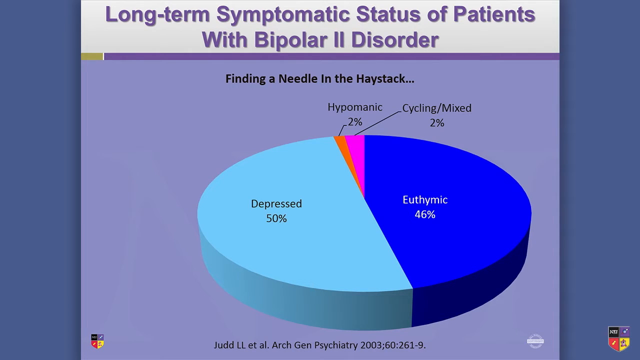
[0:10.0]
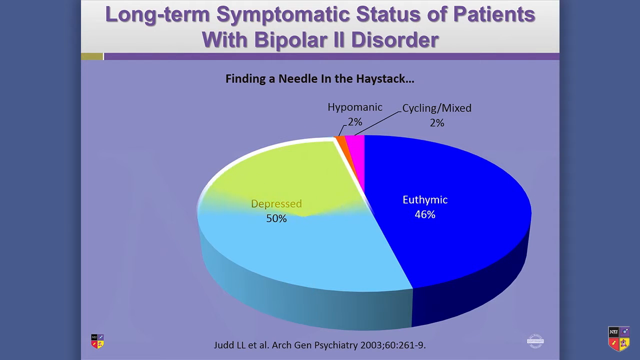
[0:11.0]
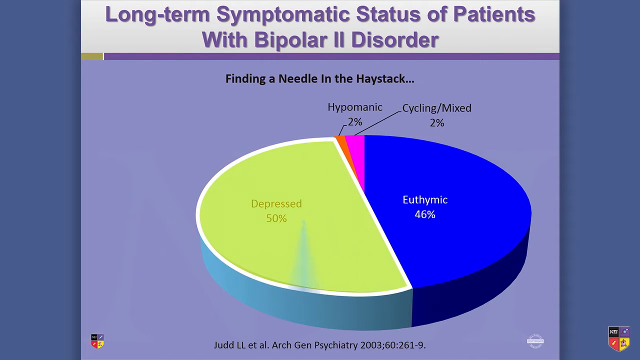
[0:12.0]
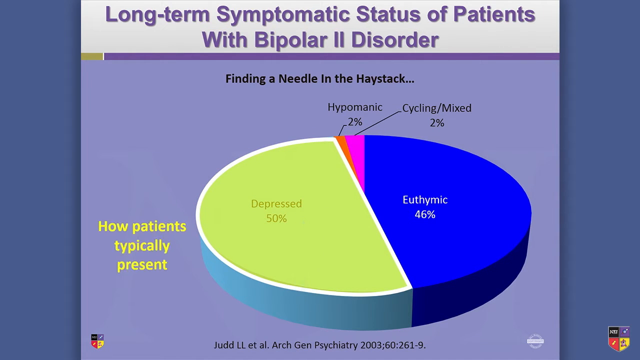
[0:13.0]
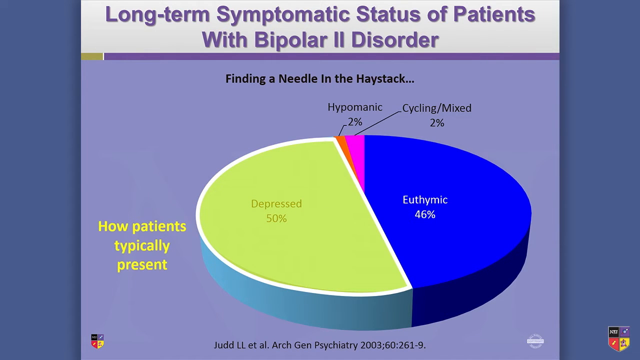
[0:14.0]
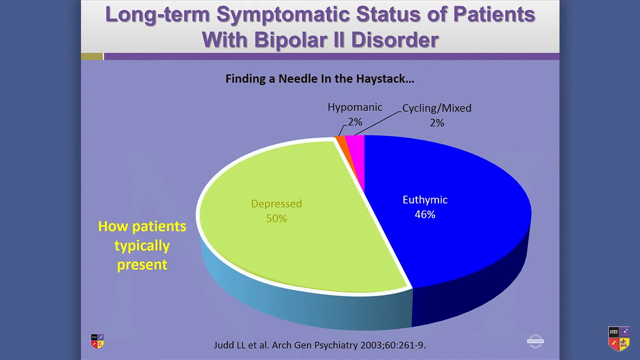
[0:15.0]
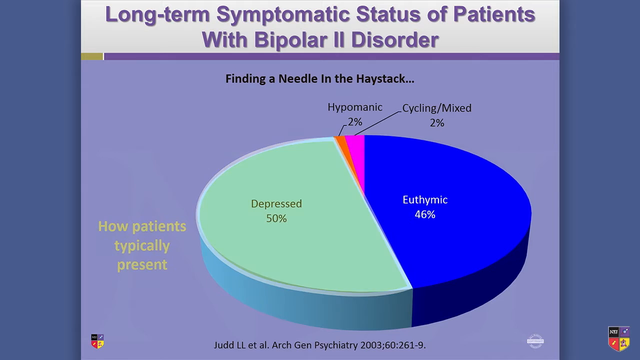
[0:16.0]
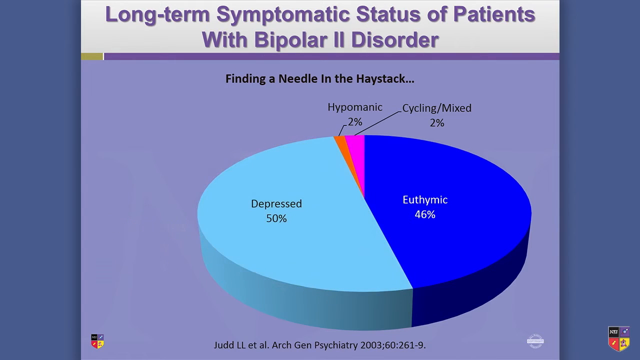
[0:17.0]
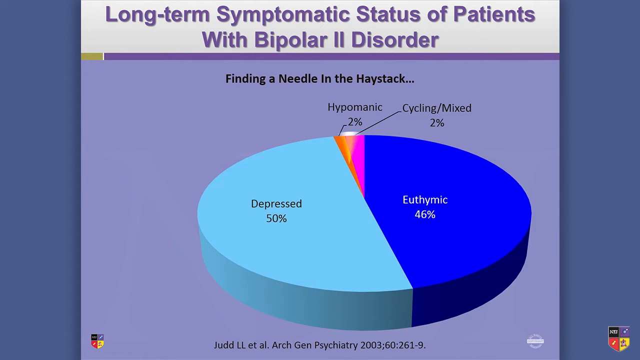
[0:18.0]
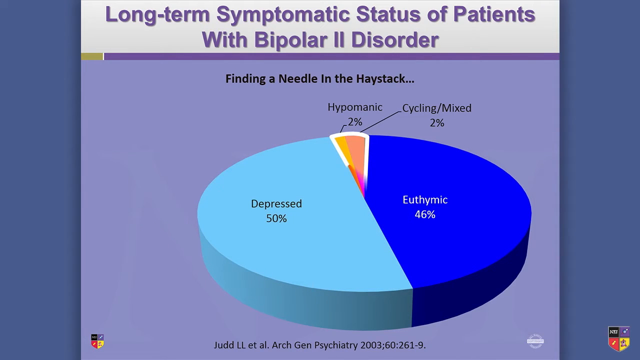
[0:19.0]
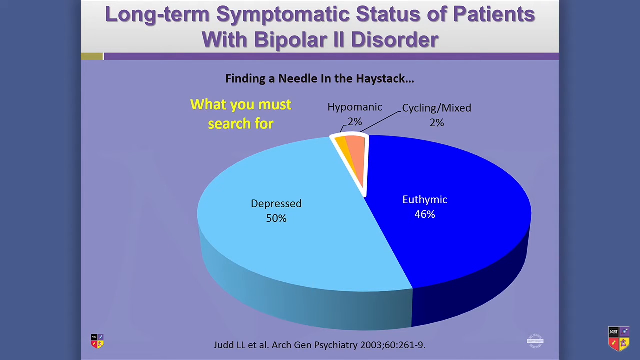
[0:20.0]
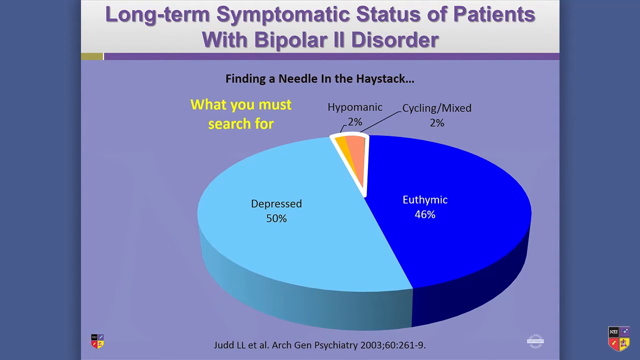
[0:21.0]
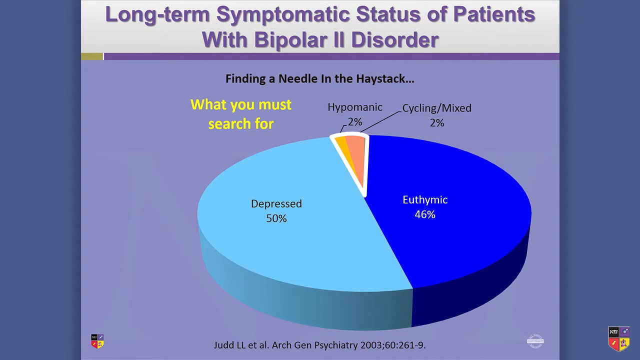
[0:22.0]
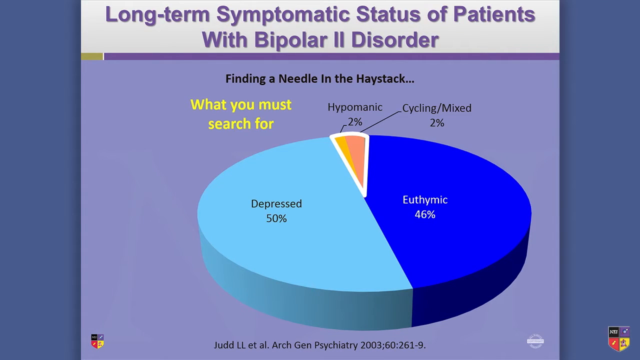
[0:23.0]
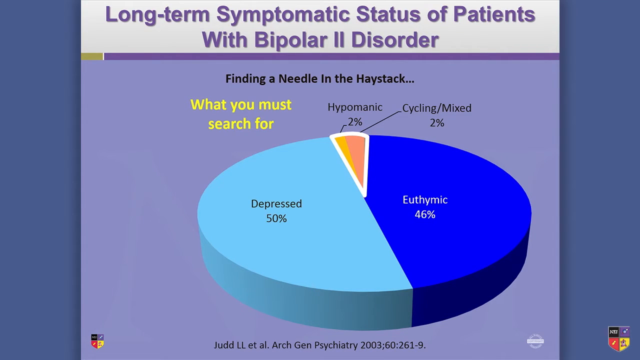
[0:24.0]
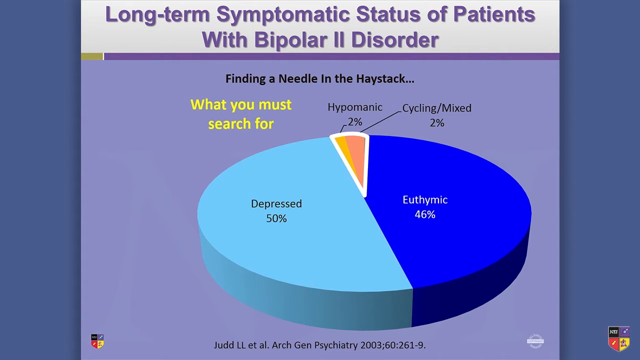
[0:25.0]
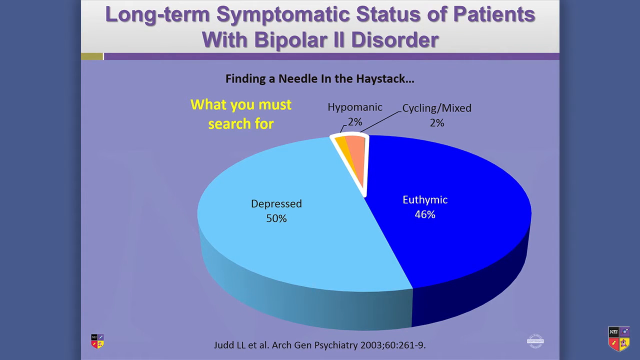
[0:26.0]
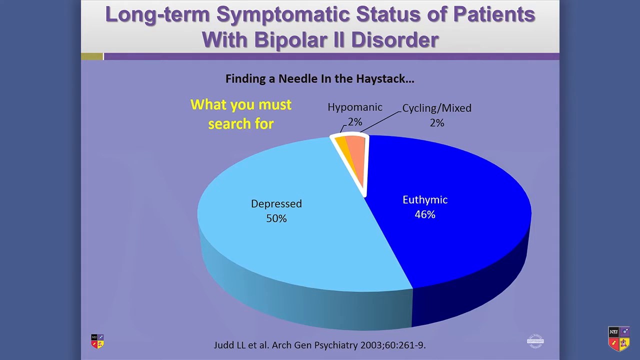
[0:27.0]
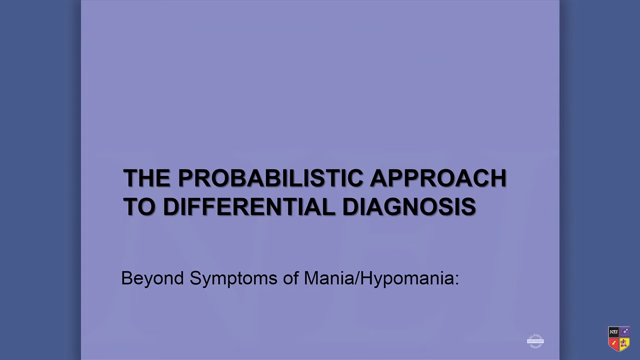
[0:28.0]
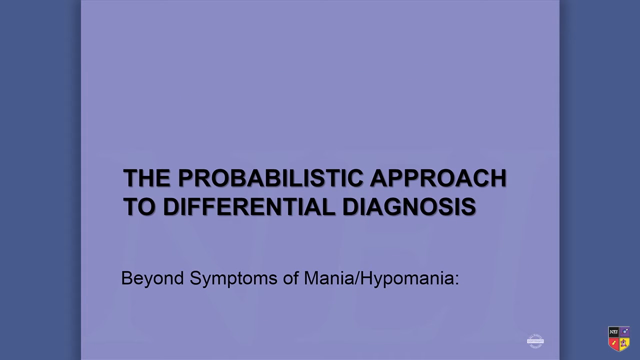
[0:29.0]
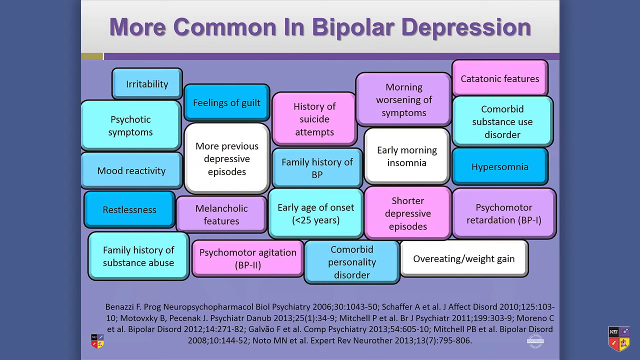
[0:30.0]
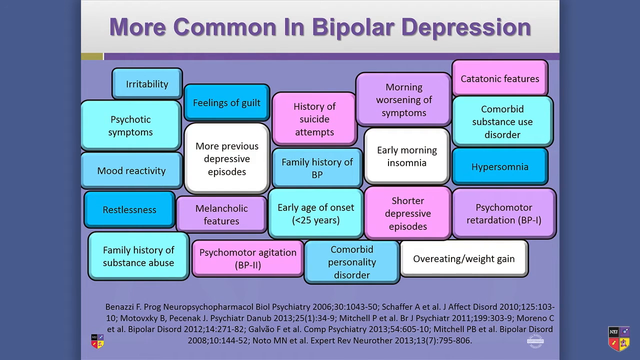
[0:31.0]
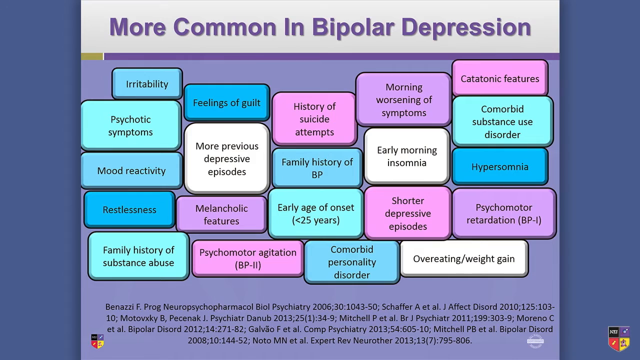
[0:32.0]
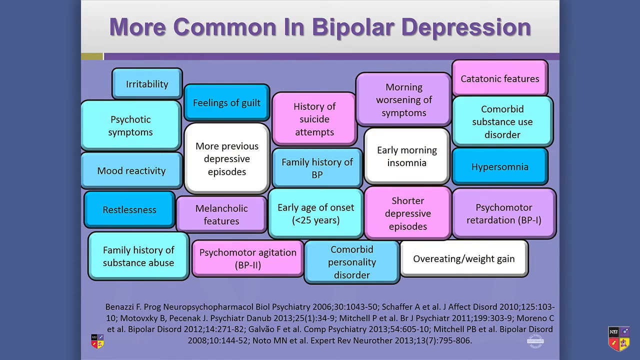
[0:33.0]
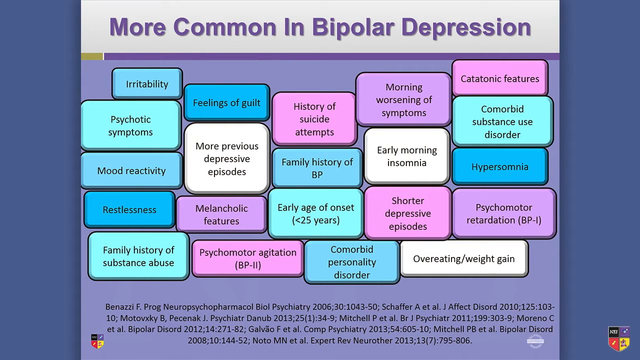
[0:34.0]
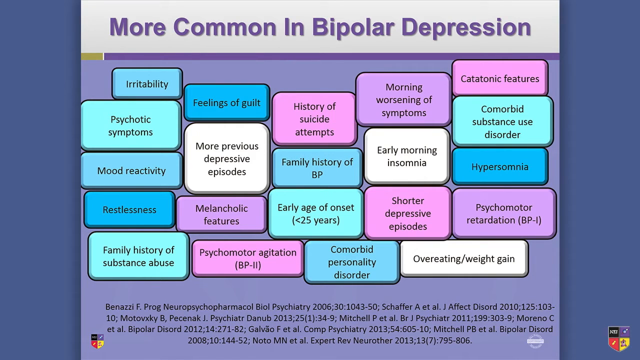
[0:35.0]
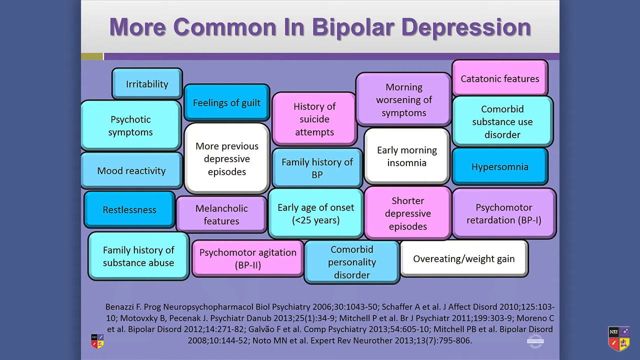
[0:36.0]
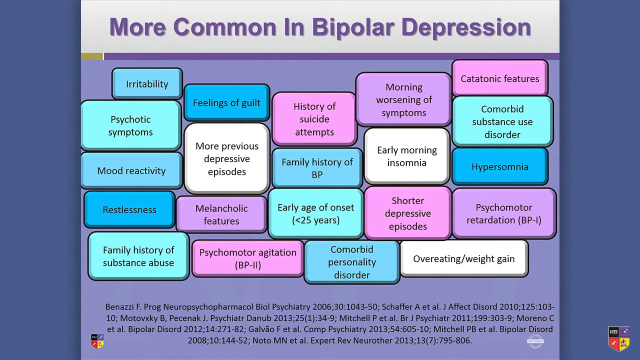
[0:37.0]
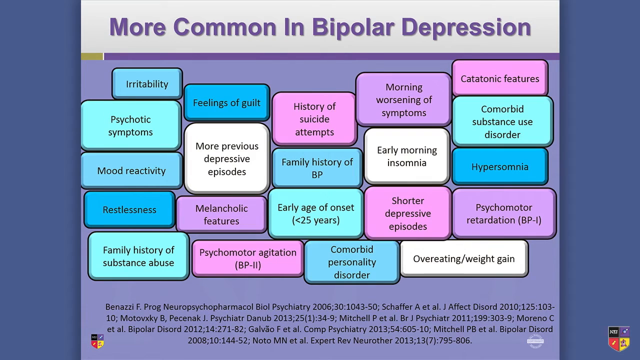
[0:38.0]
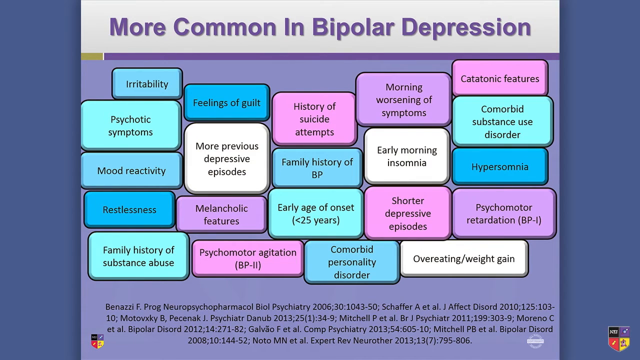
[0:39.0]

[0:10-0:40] The pie chart showing the symptoms of bipolar 2 disorder remains on screen, with depression at 50%, a 46% segment, hypomanic at 2%, and cycling/mixed at 2%. The depression segment, in blue, changes color from blue to yellow while still at 50%, and wording pops up on the side that says "how patients typically present." The wording then goes away and the pie chart returns to its normal color. Next, the 2% hypomanic and 2% cycling/mixed segments are highlighted together, with a caption that says "what you must search for." The video then moves to another slide about differential diagnosis, which shows a kind of chart of what is more common in bipolar depression.